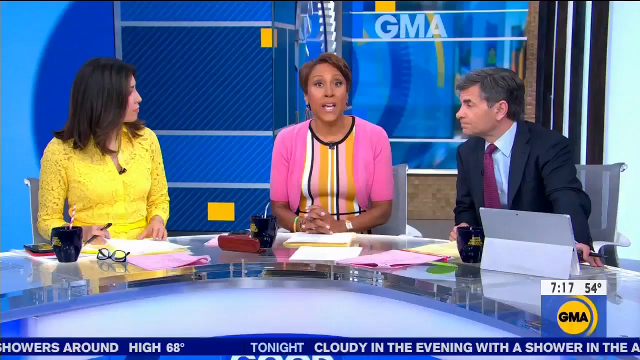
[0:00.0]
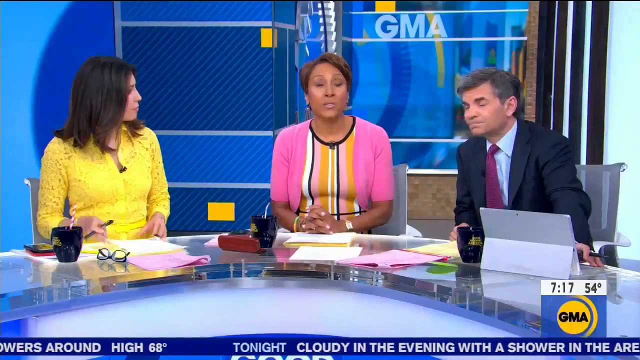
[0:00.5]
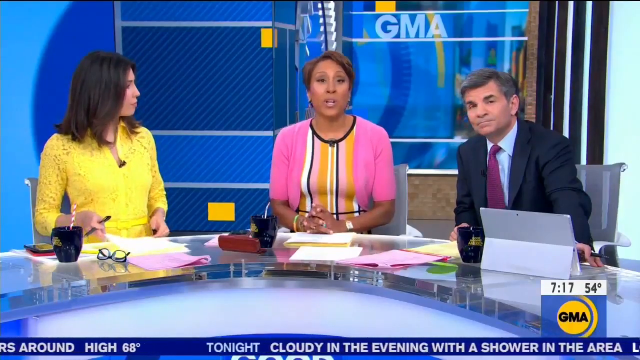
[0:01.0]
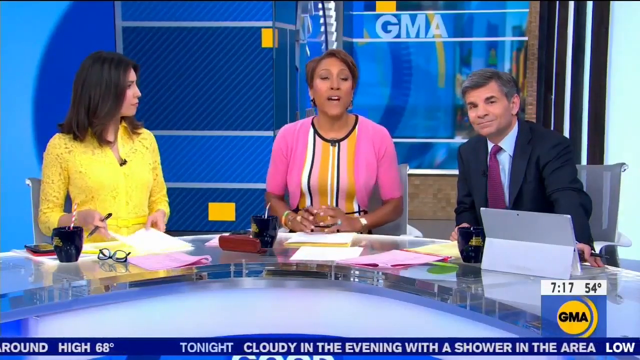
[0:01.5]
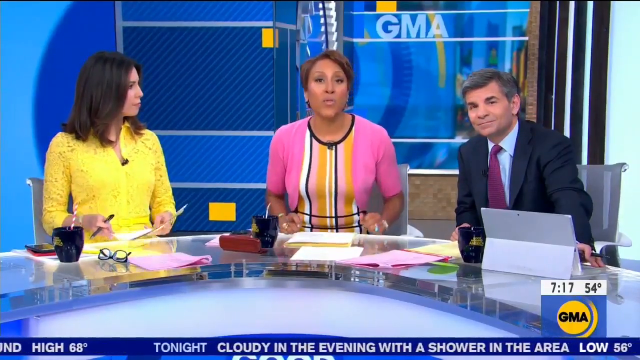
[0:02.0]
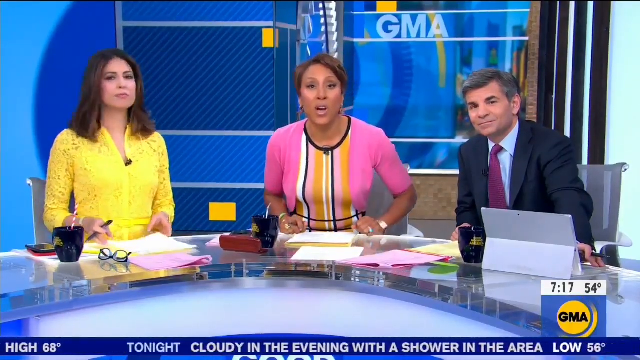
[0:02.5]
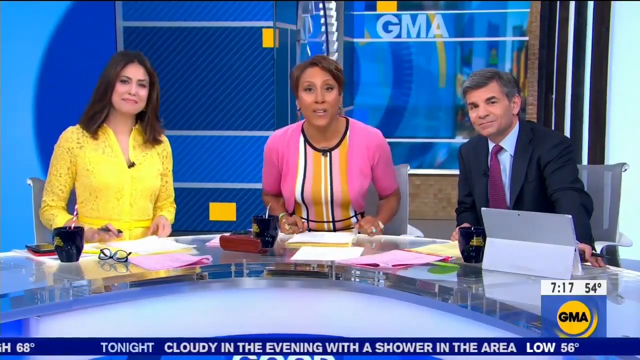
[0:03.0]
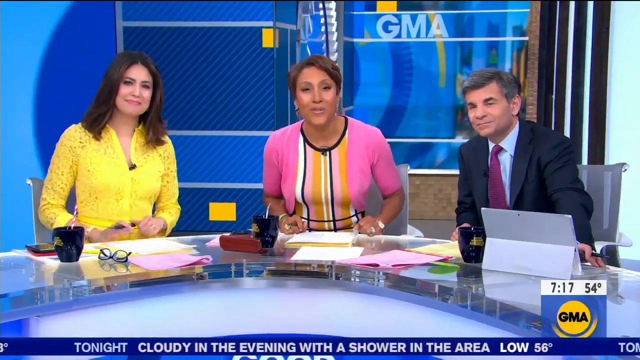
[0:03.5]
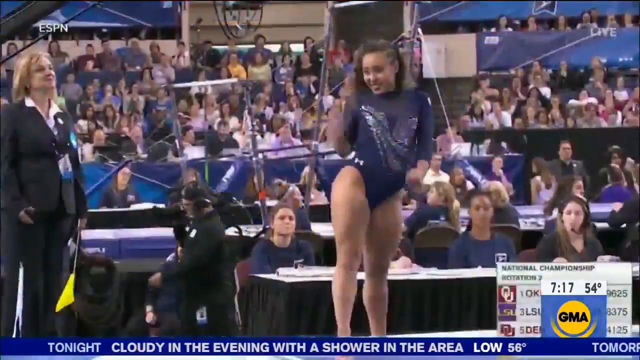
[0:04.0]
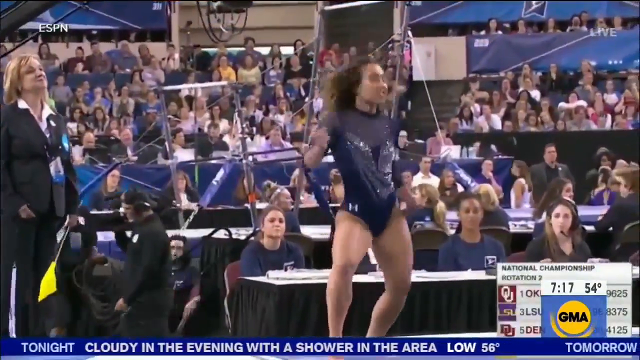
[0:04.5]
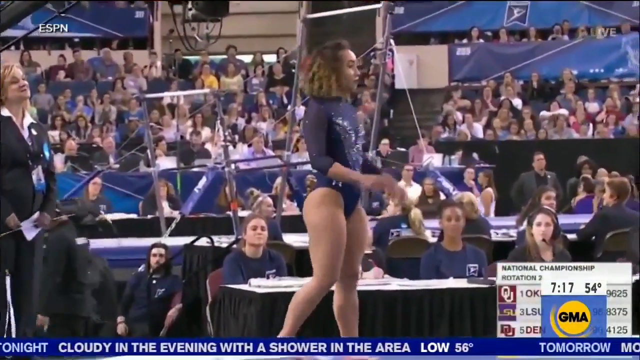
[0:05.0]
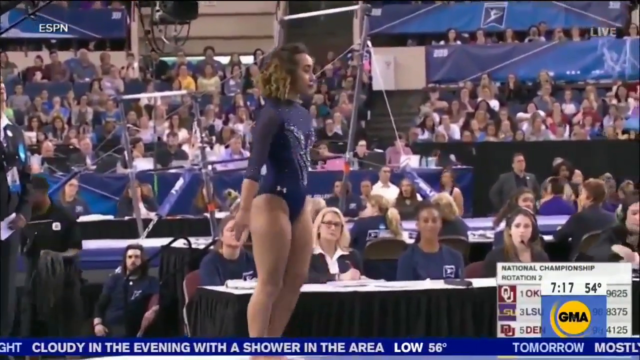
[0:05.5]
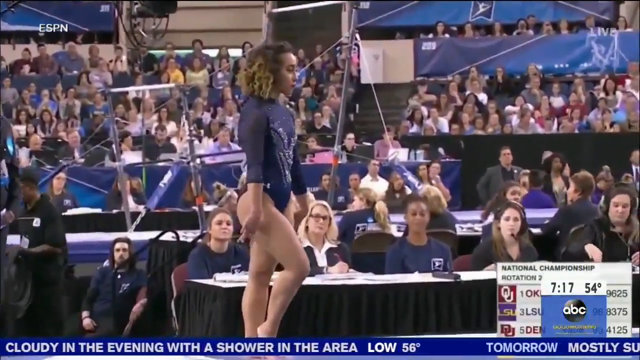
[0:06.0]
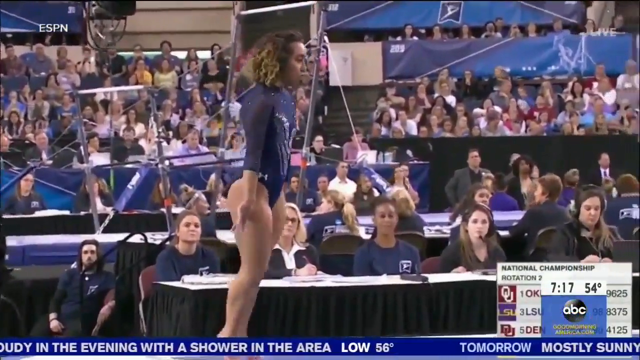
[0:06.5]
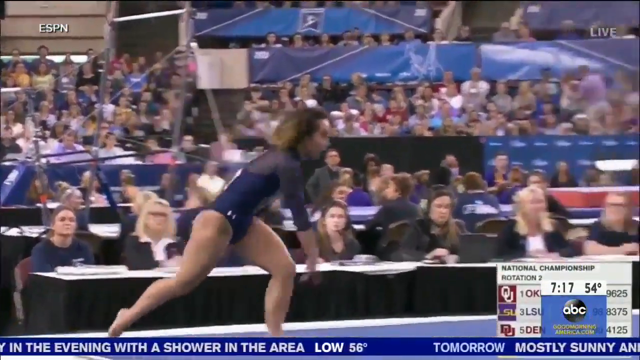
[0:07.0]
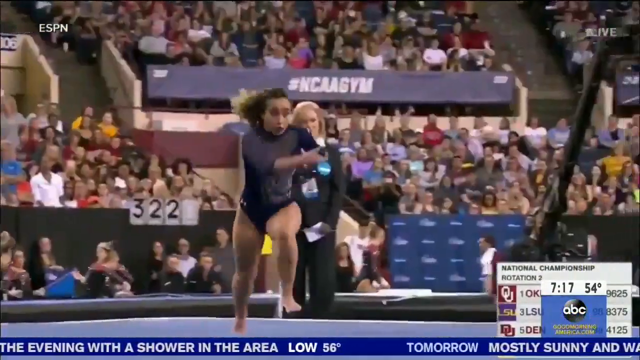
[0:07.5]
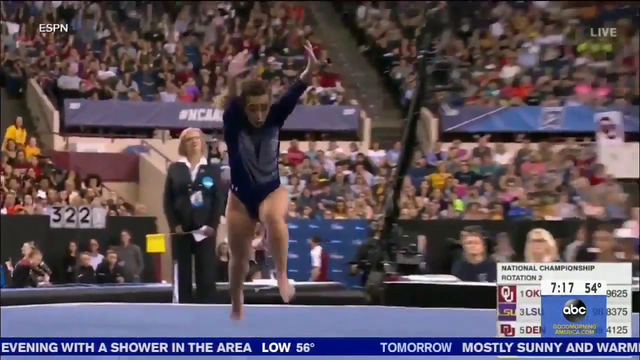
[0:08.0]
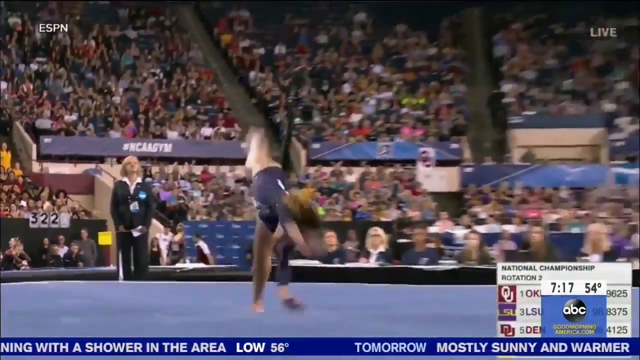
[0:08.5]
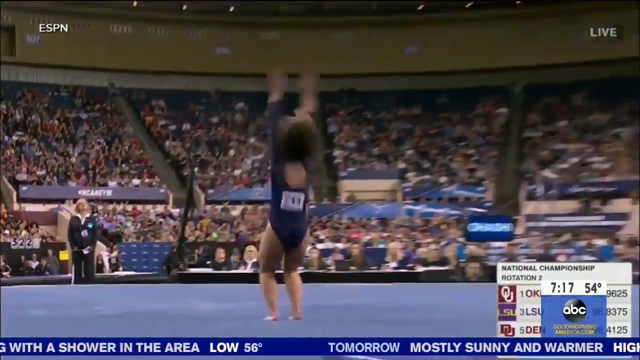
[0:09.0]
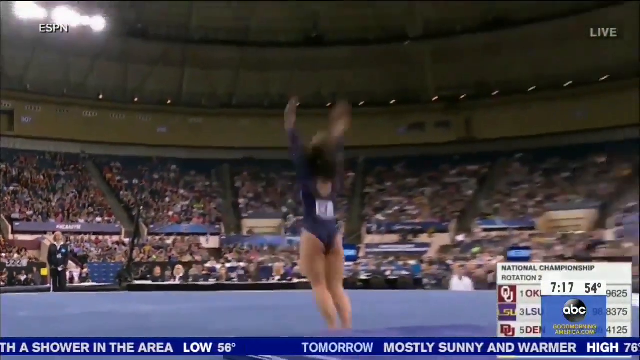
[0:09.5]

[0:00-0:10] Three reporters are in a live office studio at the GMA TV station. On the left, a woman apparently wears a yellow long-sleeved top and has medium-length dark hair. In the middle, a woman in a pink, colorful dress has short red hair. On the right, a male reporter wears a blue shirt with a red tie and a dark suit, and has some medium-length gray hair. Each of them has a cup with a drink, and there are papers on the table. Next, an article about gymnastics appears.